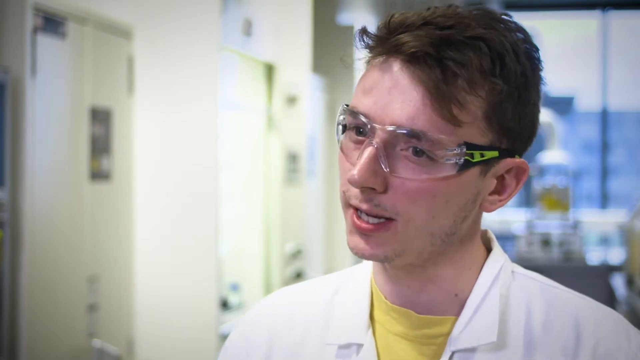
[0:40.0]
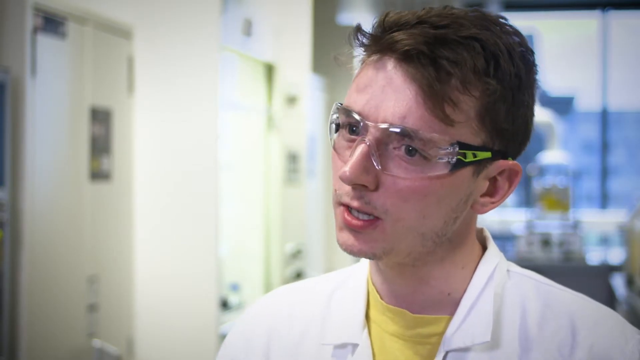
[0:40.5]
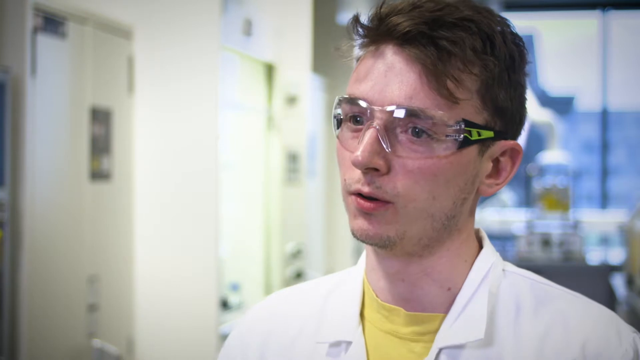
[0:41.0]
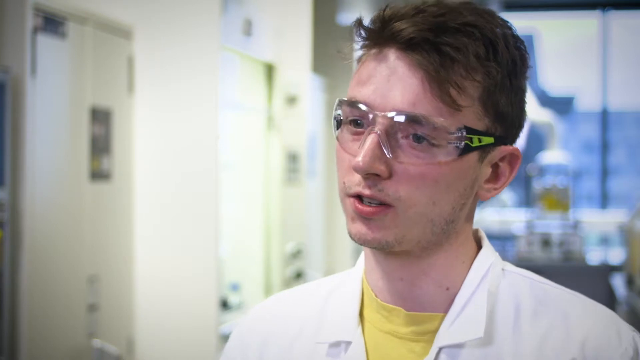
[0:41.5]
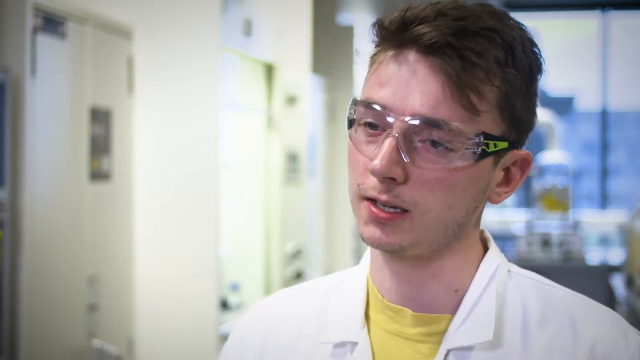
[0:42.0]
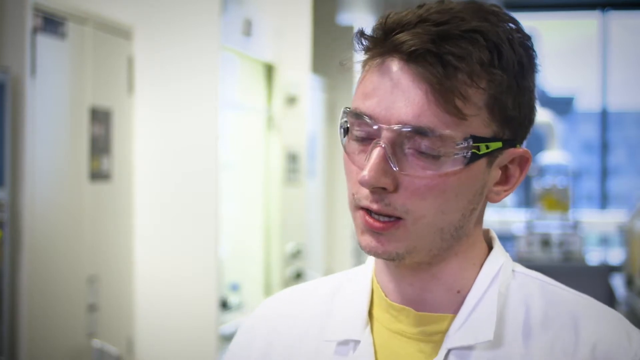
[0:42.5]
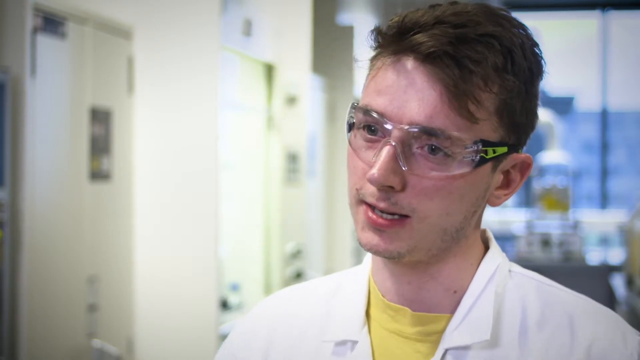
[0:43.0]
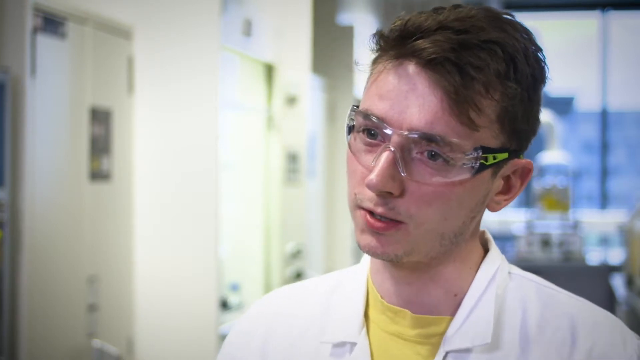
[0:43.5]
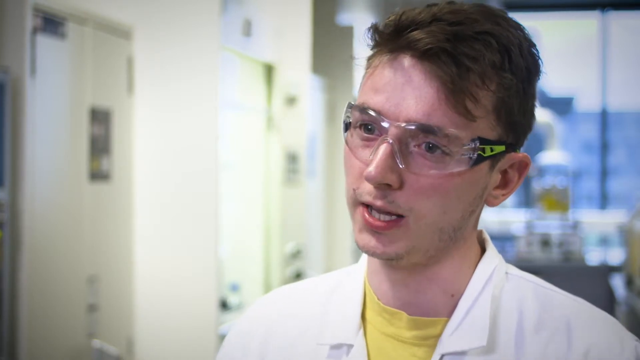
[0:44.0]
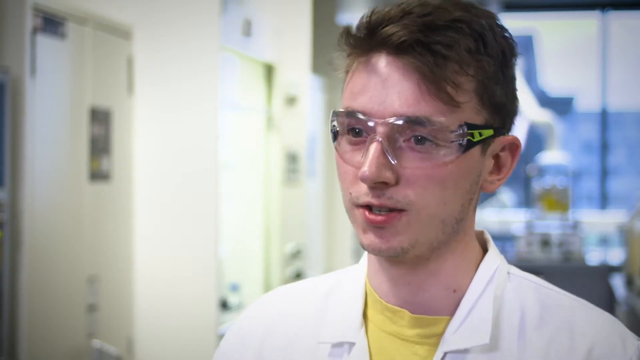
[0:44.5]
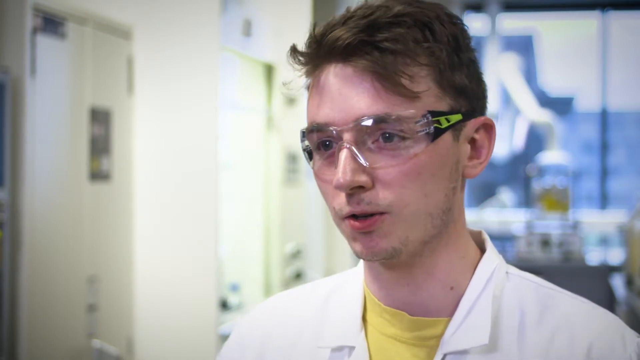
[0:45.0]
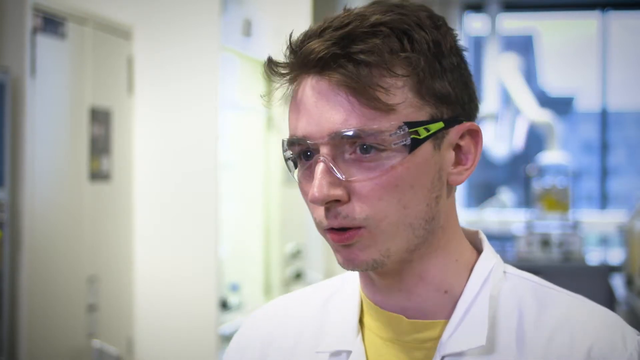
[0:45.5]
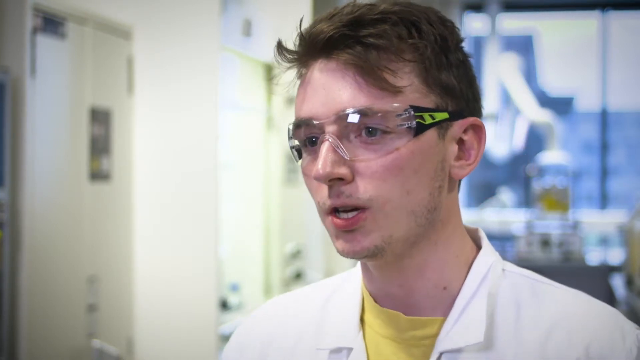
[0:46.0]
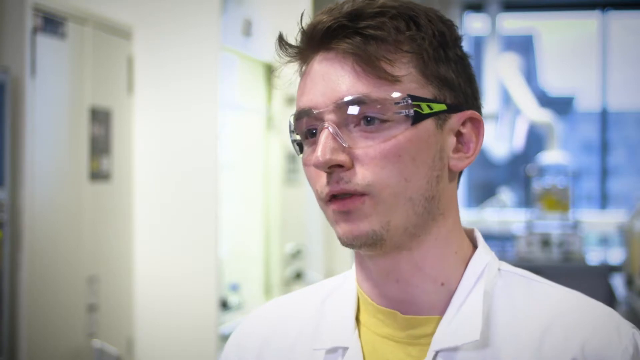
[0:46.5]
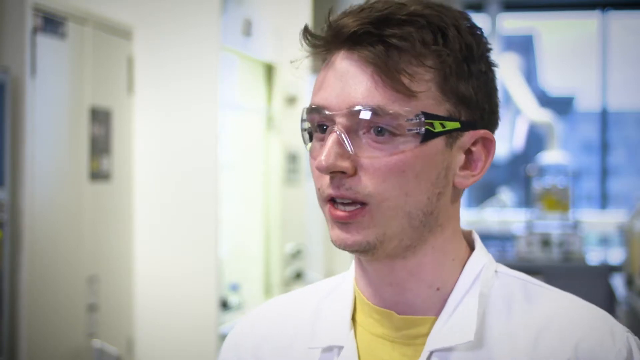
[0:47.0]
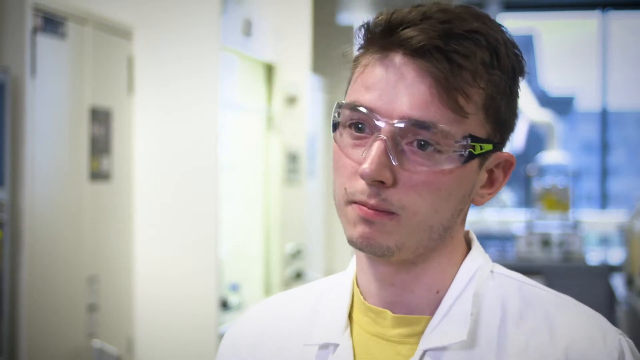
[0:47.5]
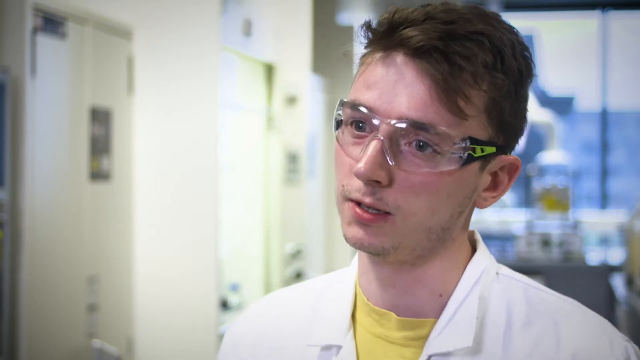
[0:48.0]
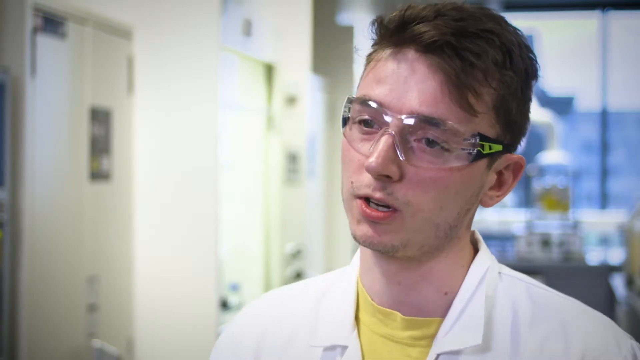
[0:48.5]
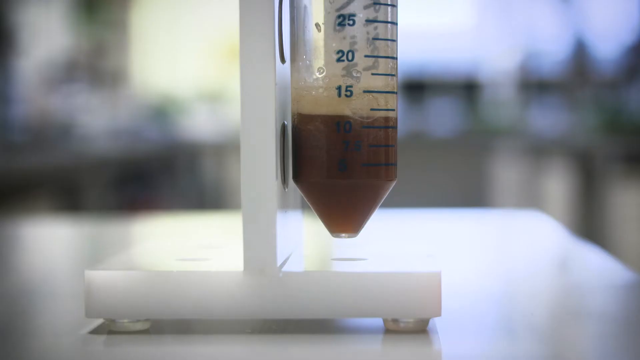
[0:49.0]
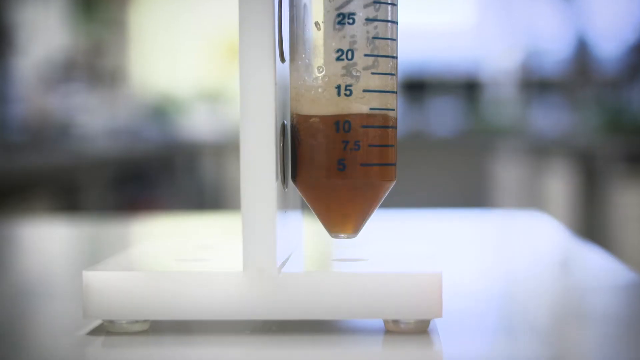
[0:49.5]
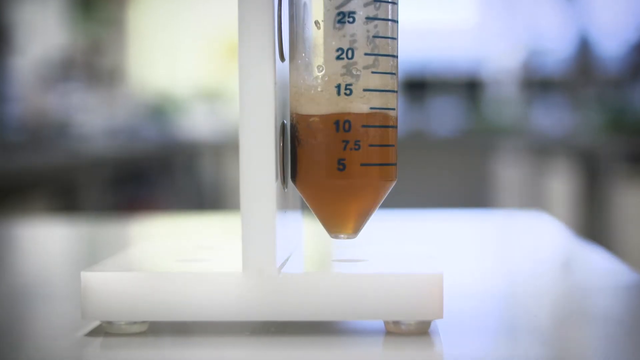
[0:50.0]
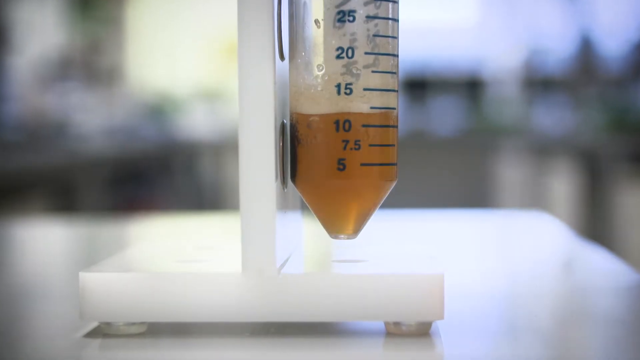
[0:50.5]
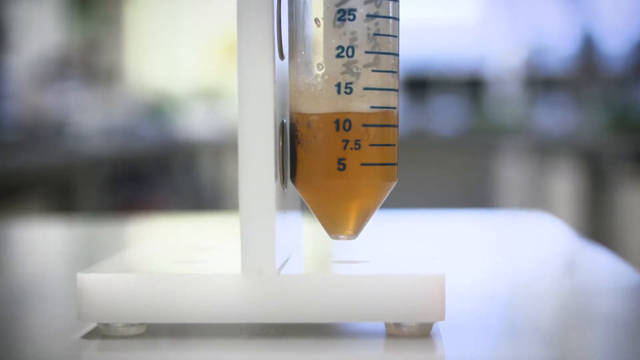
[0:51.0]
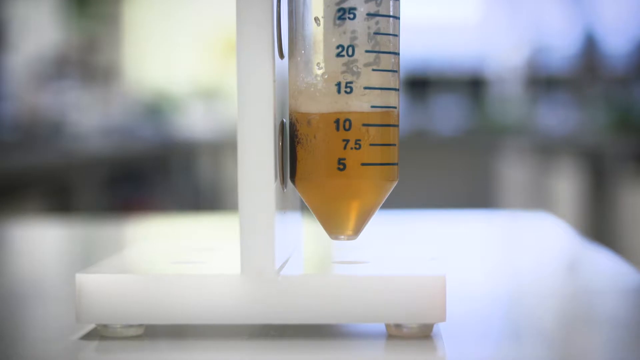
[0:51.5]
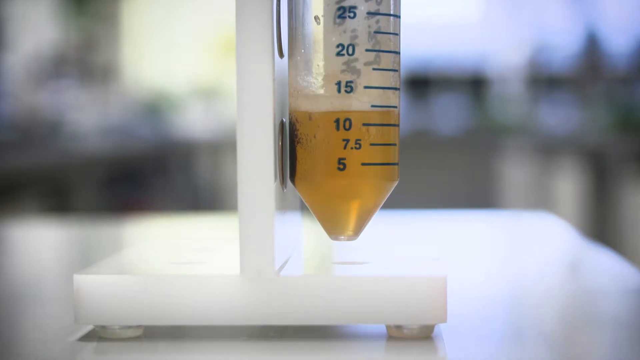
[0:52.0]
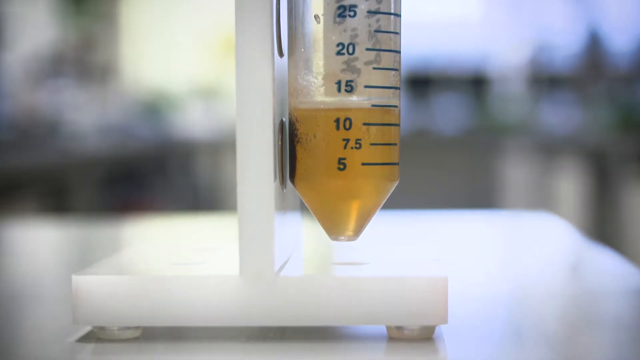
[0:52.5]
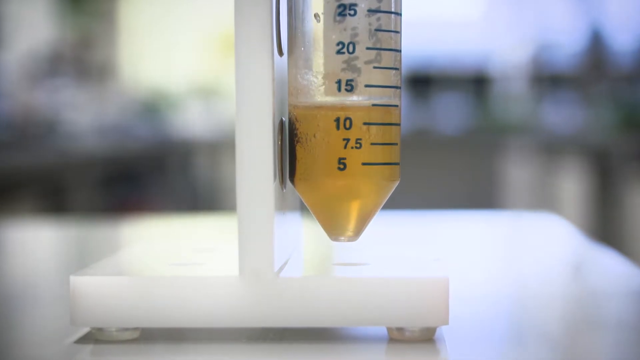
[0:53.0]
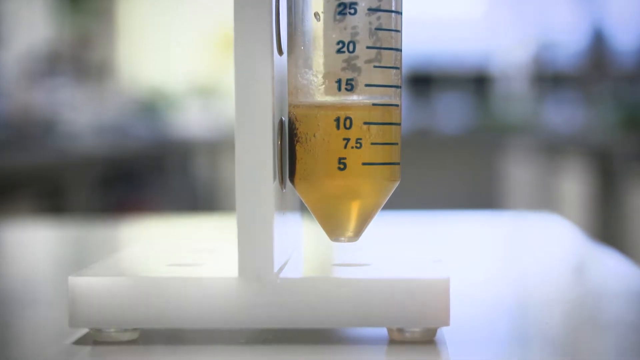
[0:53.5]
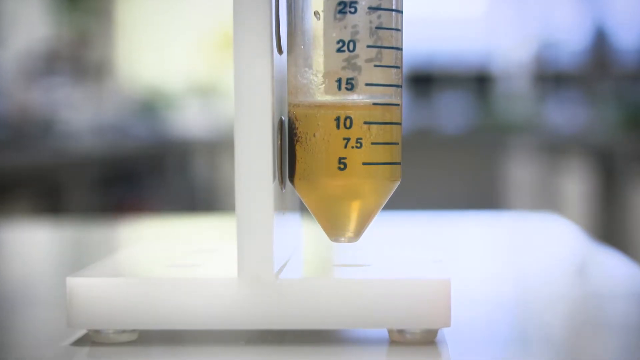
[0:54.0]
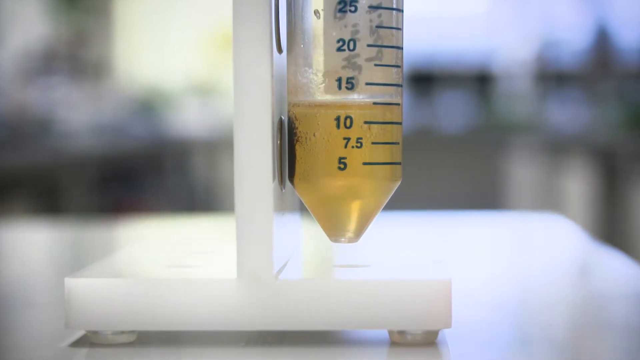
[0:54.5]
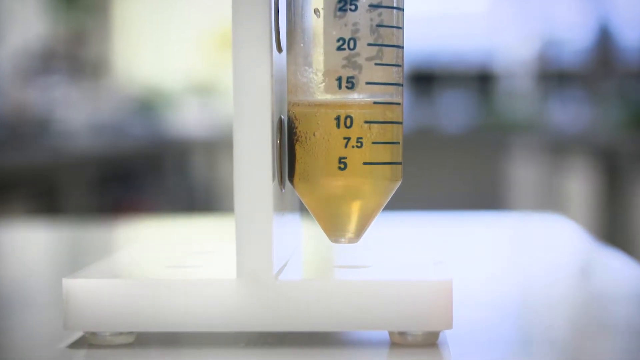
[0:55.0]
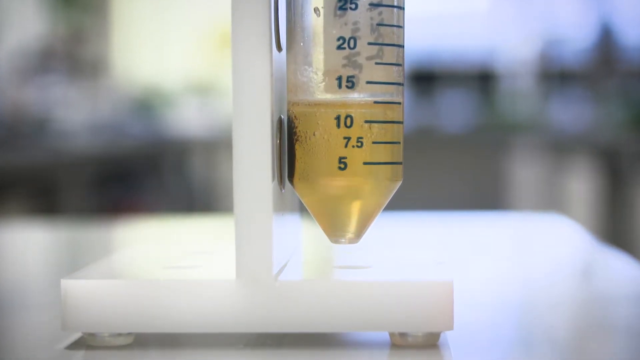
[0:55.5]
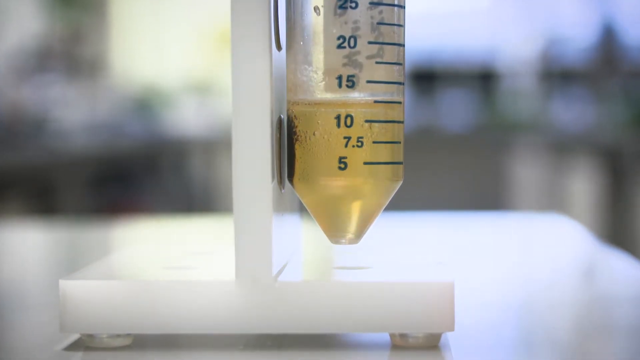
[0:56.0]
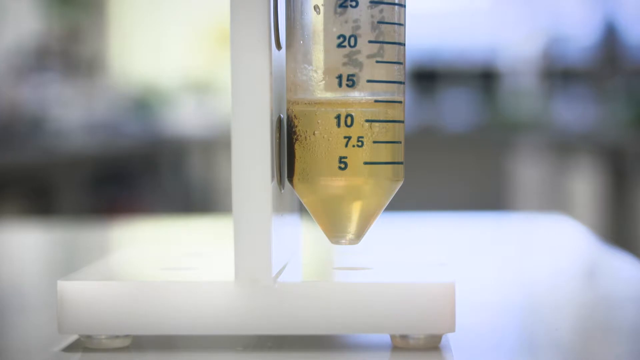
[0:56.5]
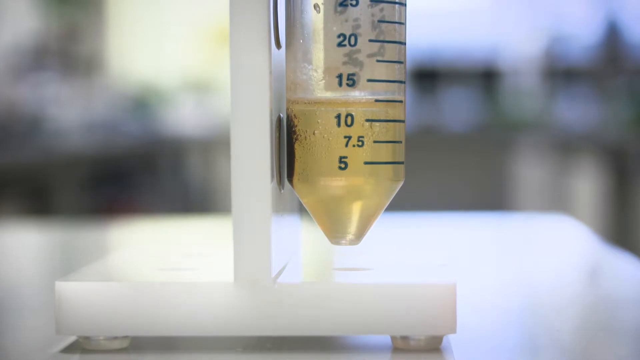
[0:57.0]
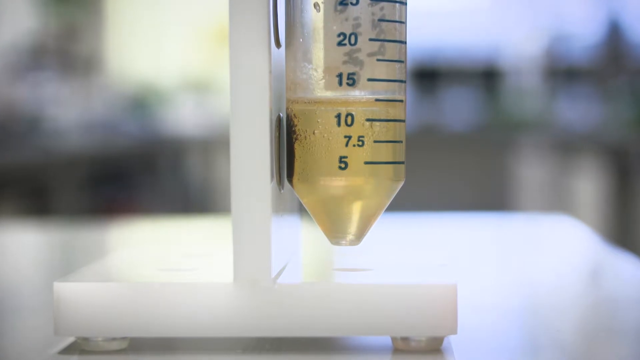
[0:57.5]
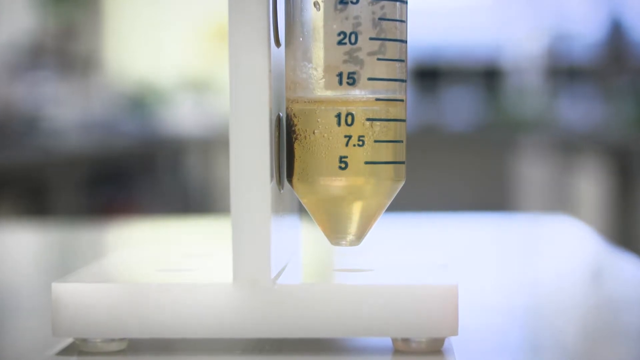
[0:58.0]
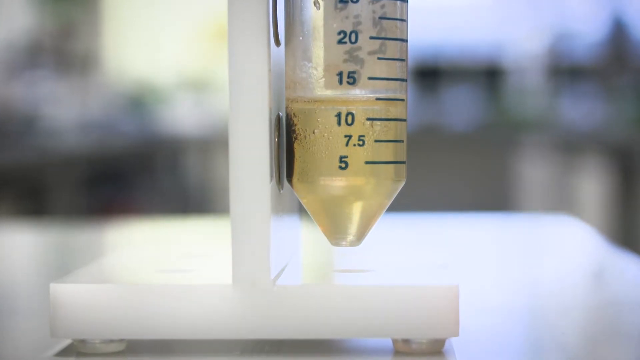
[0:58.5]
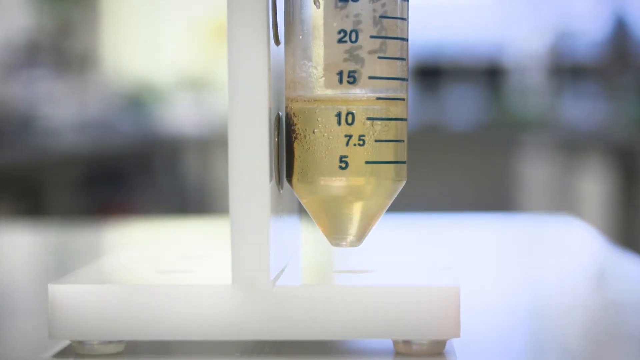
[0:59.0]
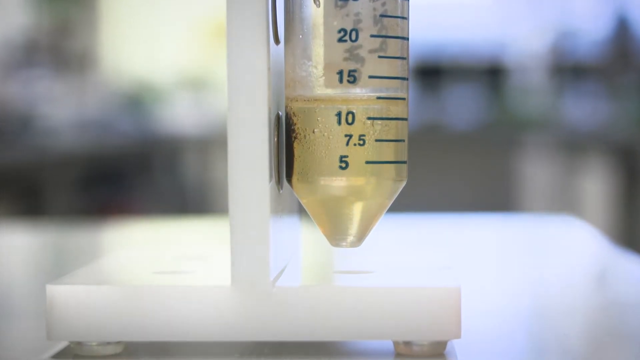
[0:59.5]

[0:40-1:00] Bill Stockham, a PhD student, is interviewed in a lab wearing safety goggles and a white lab coat, apparently with a yellow t-shirt underneath. He has put a yellow substance in a long, narrow measuring beaker and hung it up. In close-up, the liquid changes from a darker color to a lighter one: the yellow becomes less concentrated, going from gold to more transparent. Windows are behind him. He has brown hair and looks young. A chemical reaction is going on inside the long beaker, which has blue numbers on it; the liquid bubbles and turns a little.